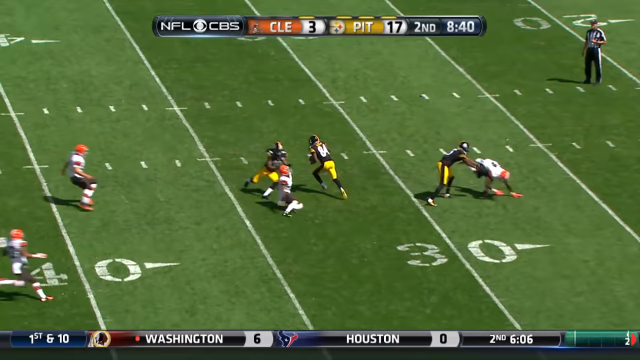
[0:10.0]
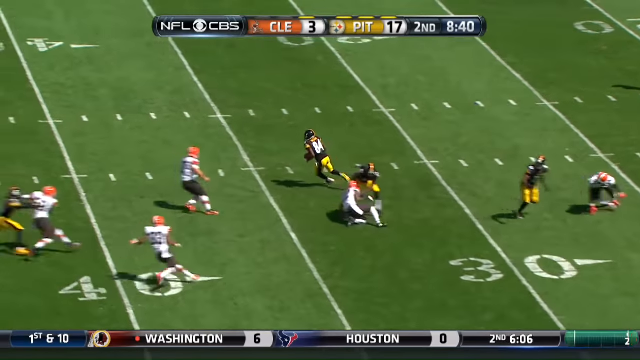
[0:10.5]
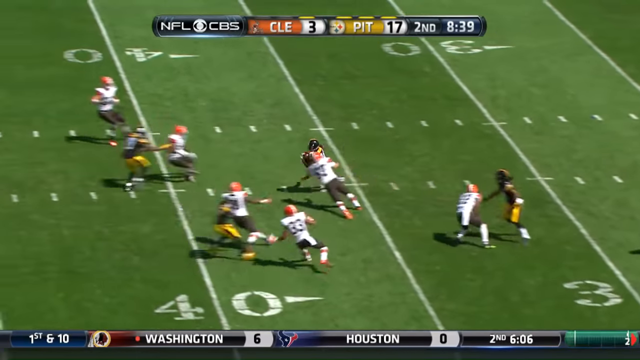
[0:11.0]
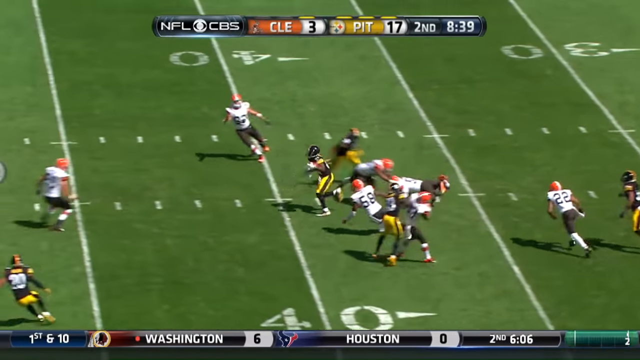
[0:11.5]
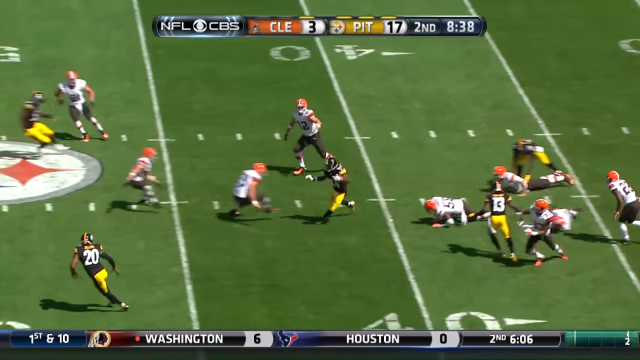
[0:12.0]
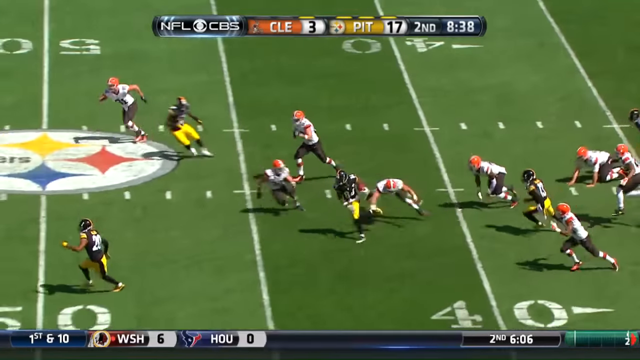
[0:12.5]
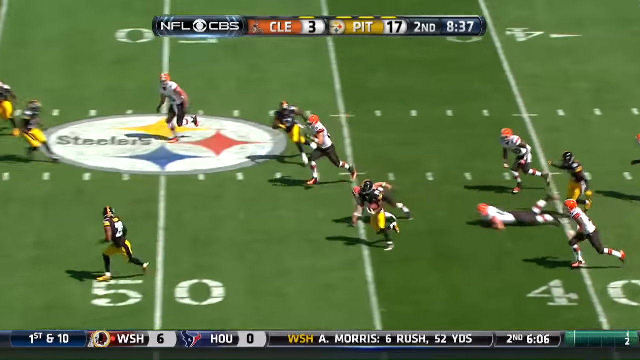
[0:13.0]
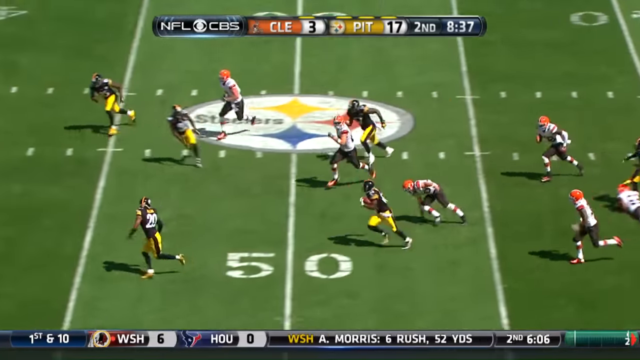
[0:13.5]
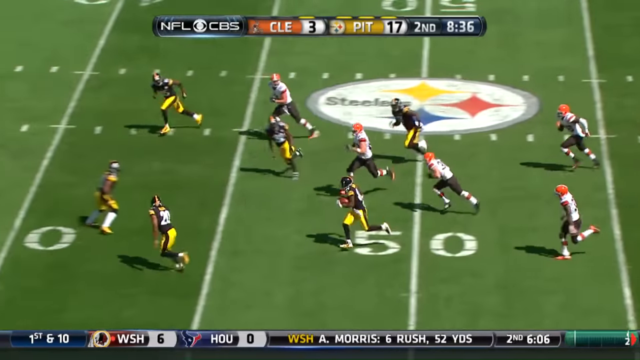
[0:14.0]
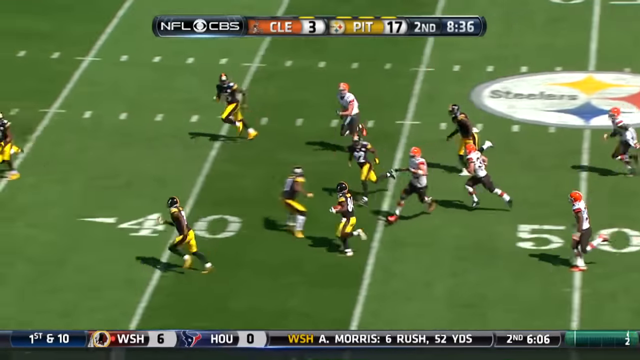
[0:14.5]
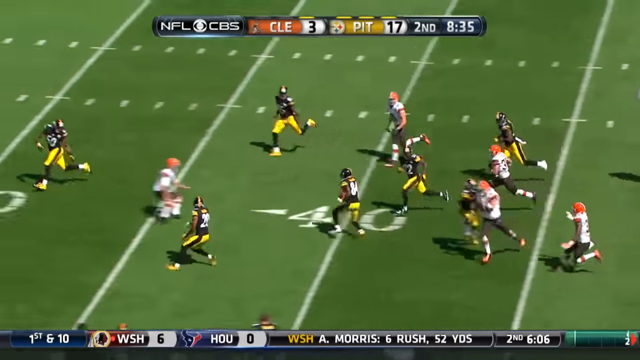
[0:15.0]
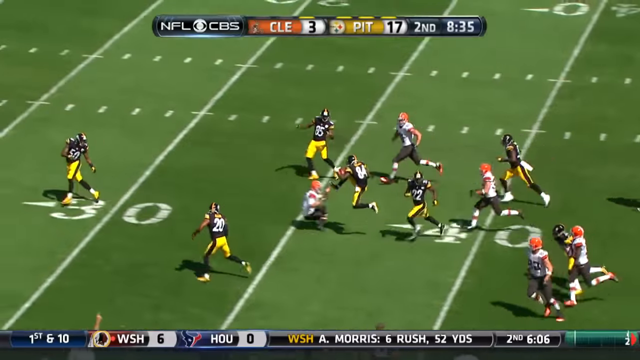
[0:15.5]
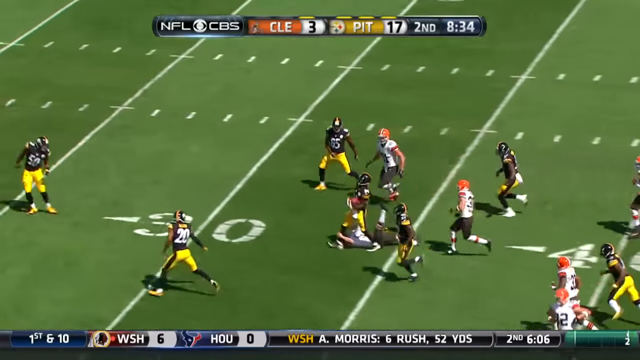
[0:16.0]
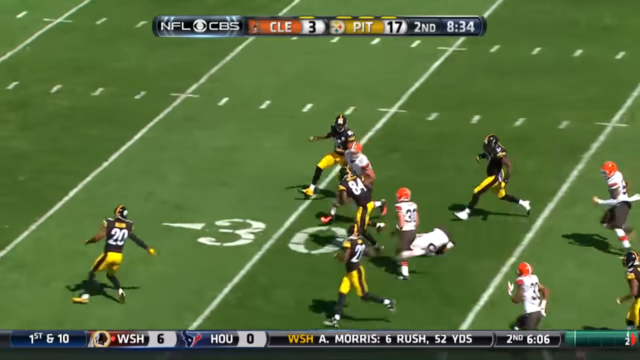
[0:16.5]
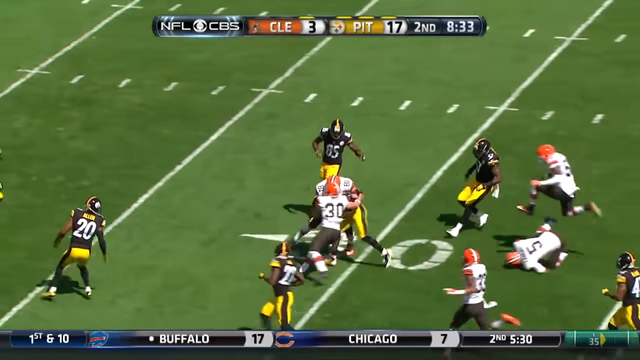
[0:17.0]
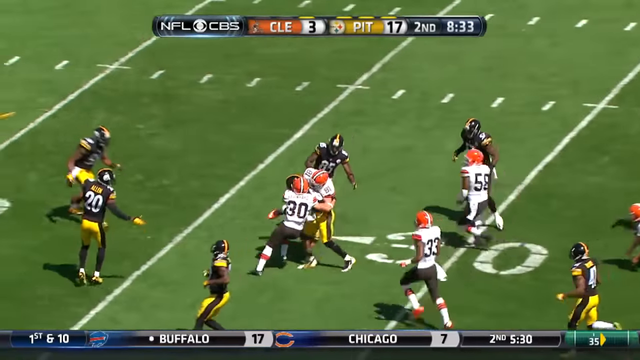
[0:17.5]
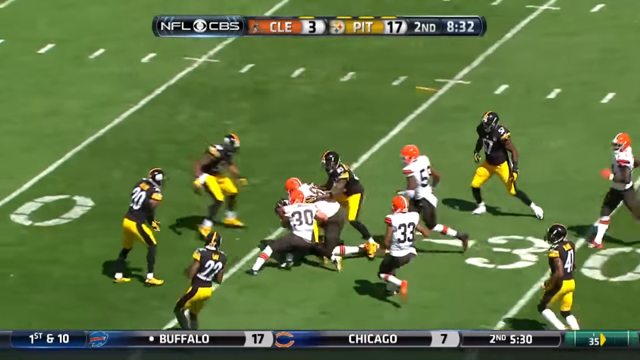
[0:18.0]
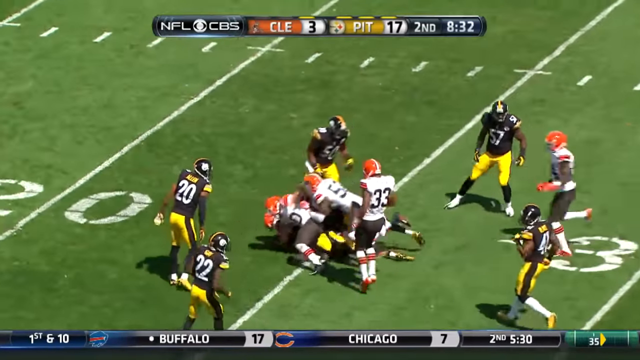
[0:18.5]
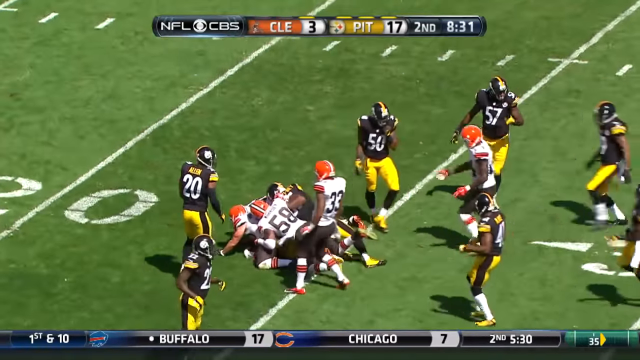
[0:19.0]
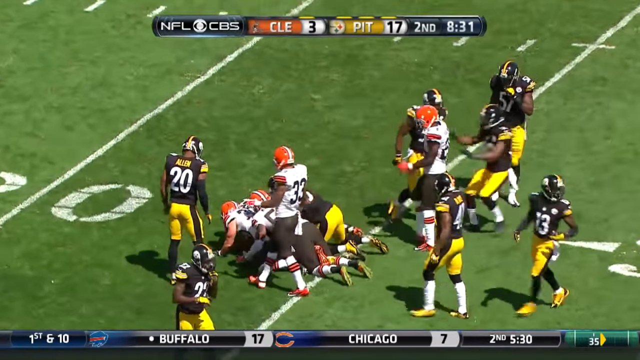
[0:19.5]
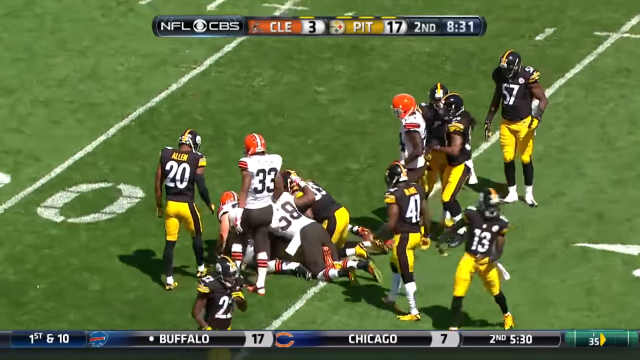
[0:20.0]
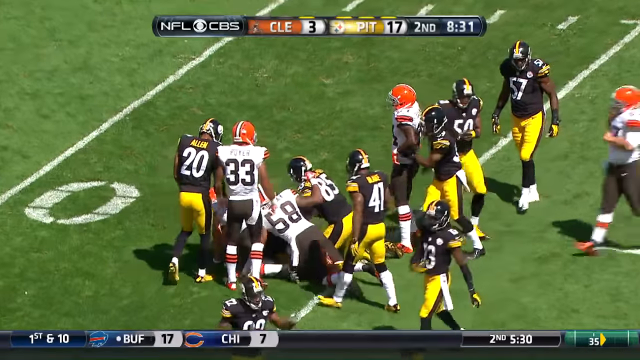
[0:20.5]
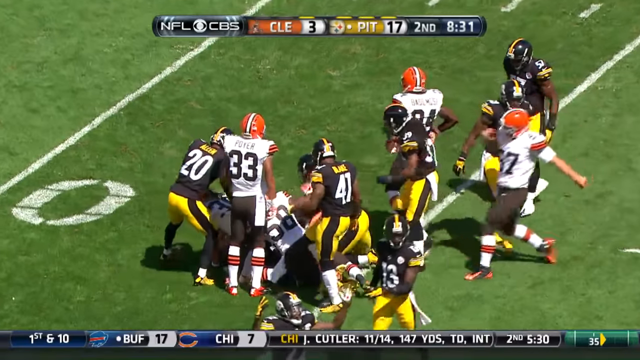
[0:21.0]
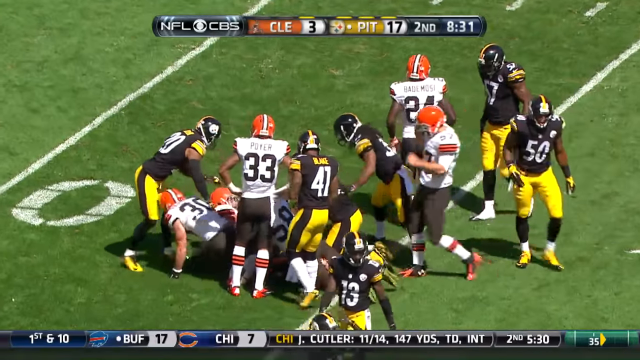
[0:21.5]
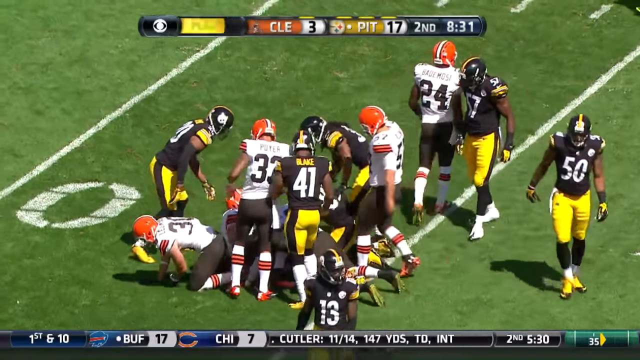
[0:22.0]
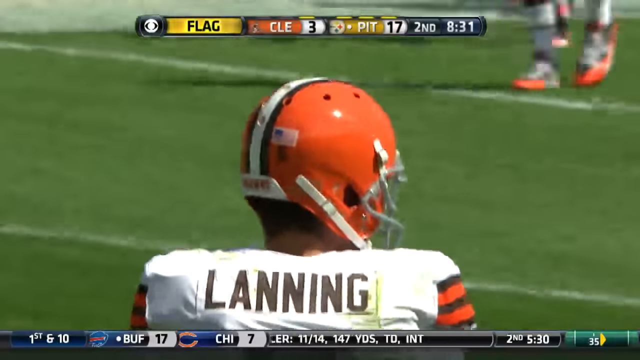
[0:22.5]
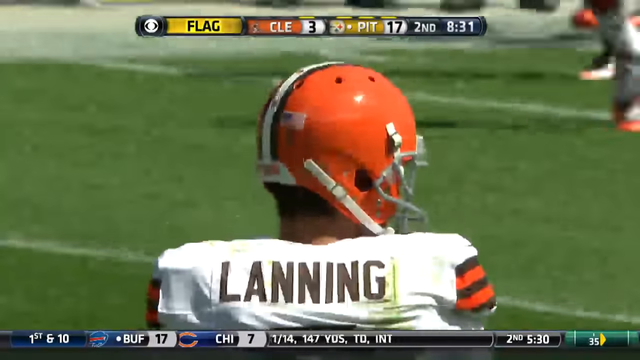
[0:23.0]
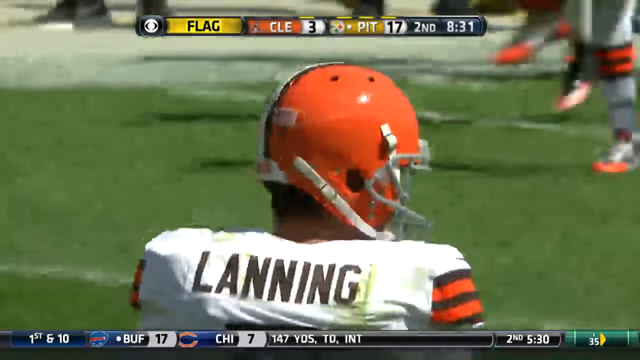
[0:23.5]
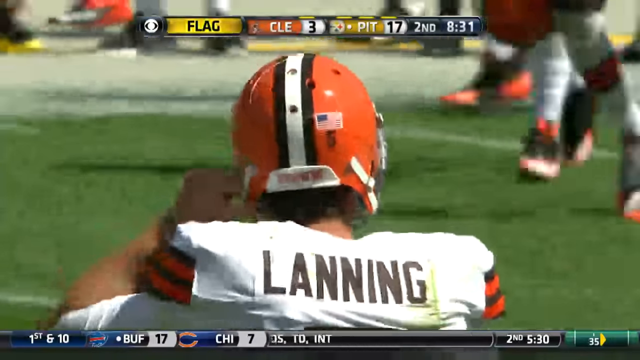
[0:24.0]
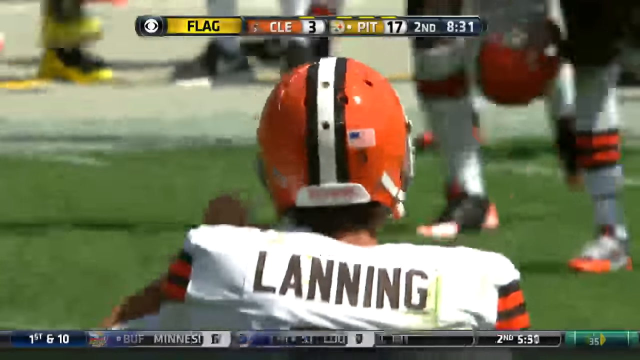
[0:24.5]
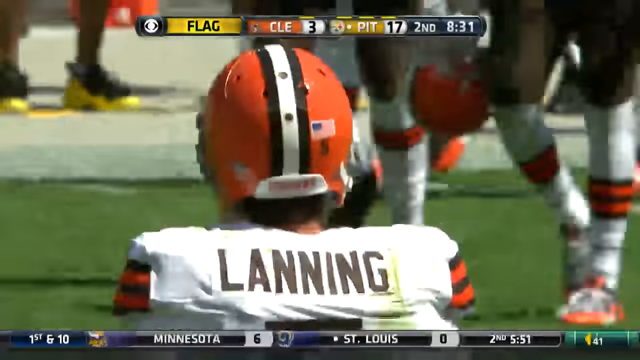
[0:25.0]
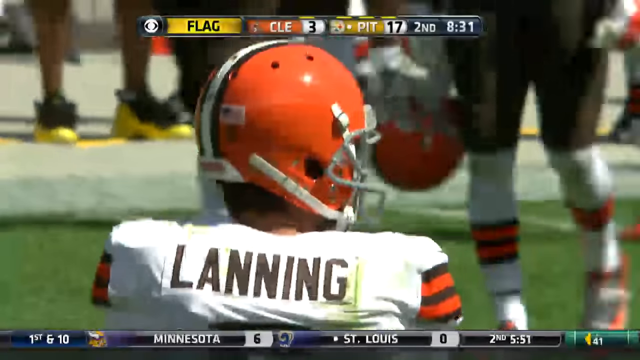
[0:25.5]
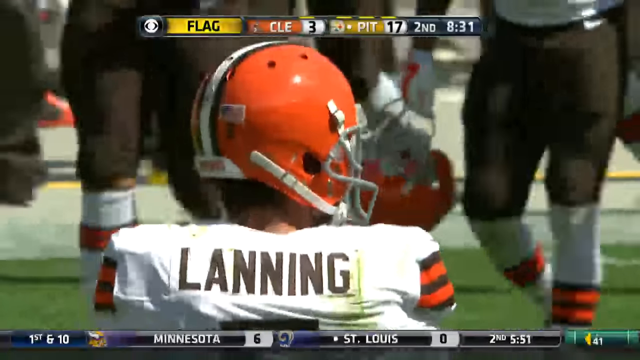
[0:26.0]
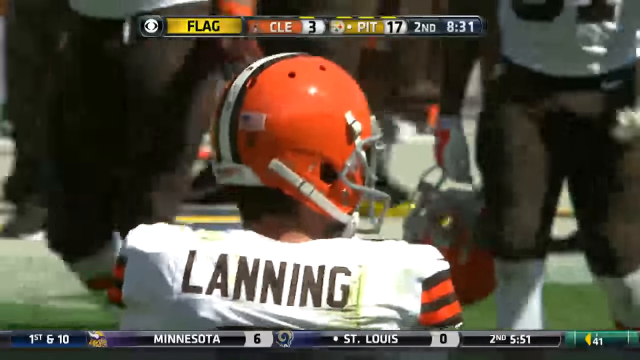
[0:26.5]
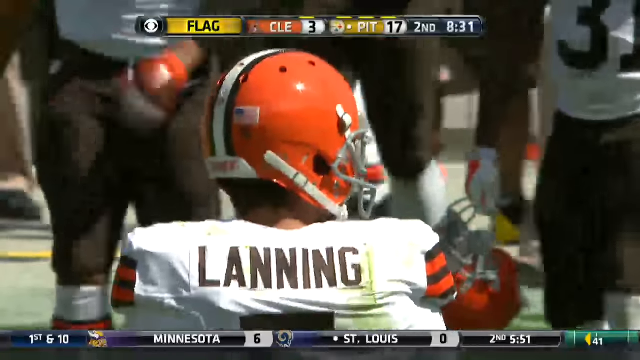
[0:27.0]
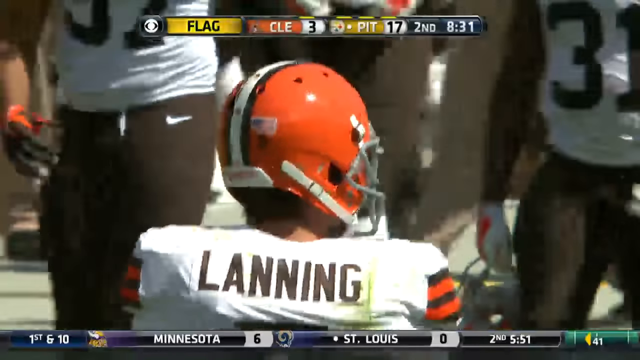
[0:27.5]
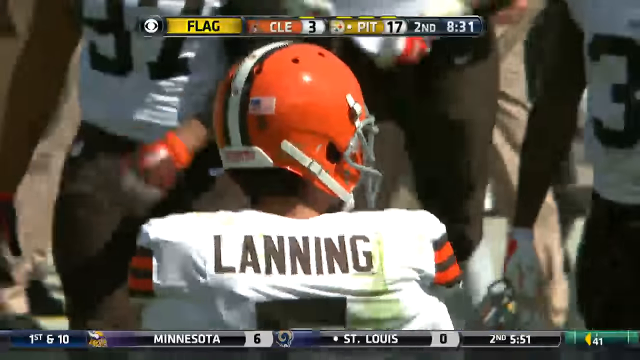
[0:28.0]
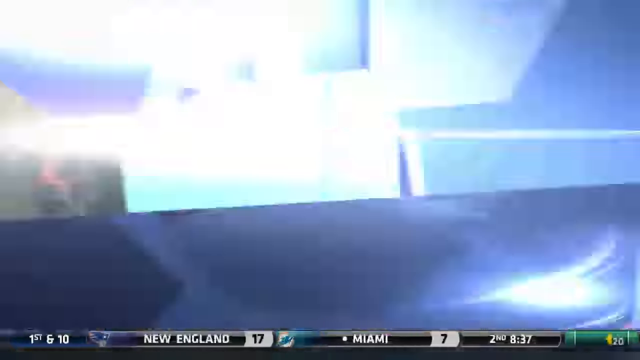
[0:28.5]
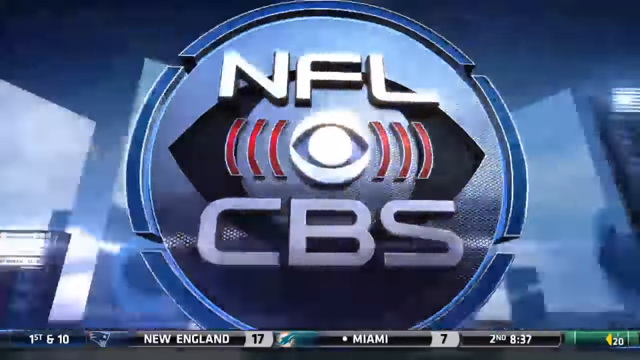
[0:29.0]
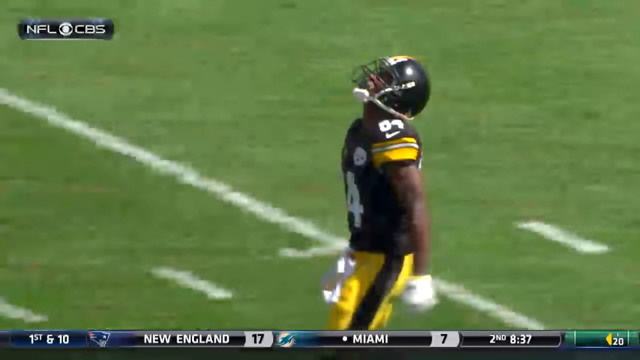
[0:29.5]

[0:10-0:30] The player with the ball dodges a bunch of players, crosses the 50 and then the 40. Just before the 30 line he makes a jump and kicks a player in the face. Cleveland players grab him just after he crosses the 30 line and sort of bring him down at the line between the 30 and 20. Everyone sort of piles on him, and some people try to get the others off of him. Perhaps the kicked player, whose last name is Lanning, is seen sort of walking away, looking to the right and sort of walking toward the rest of his team. A CBS playback logo appears, followed by player number 84 looking up to grab the ball. Meanwhile, the bottom of the screen continues to show other teams and their scores: Washington 6, Houston 0, 1st and 10, second quarter with 6 minutes left, along with other statistics, followed by information about Buffalo and Chicago.